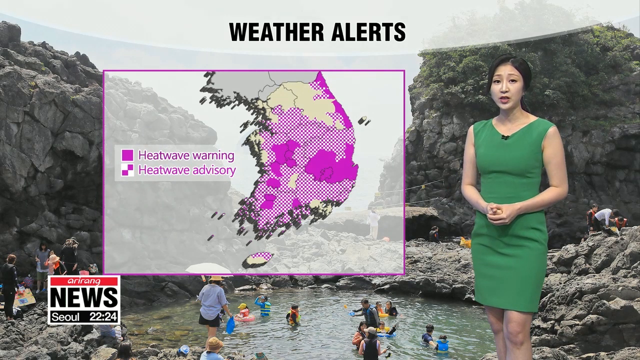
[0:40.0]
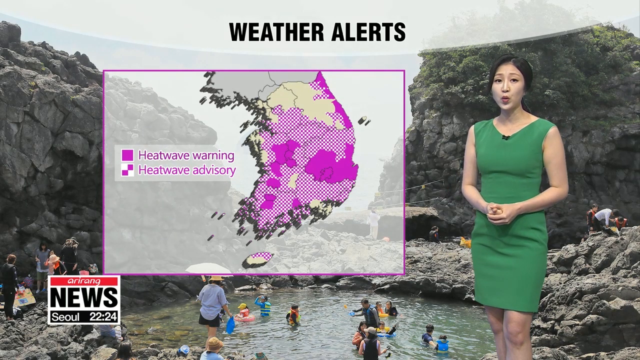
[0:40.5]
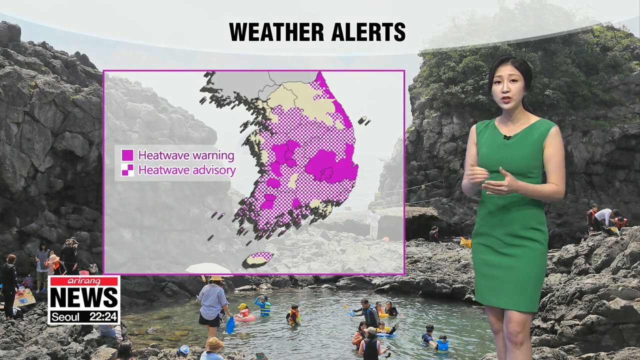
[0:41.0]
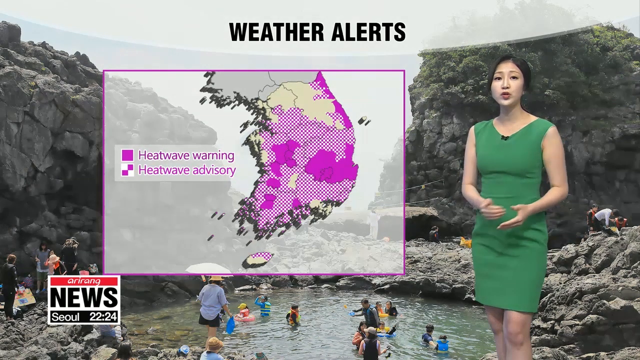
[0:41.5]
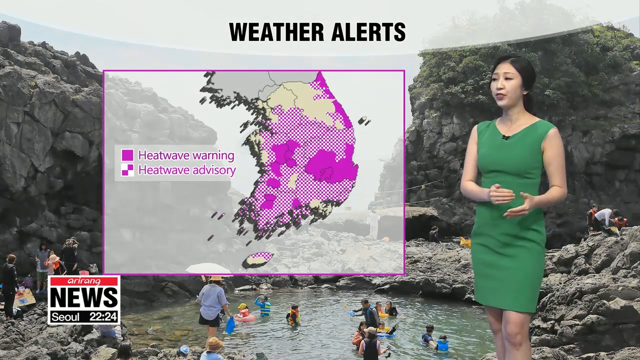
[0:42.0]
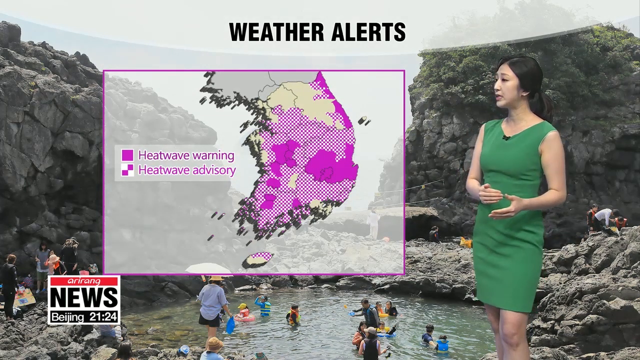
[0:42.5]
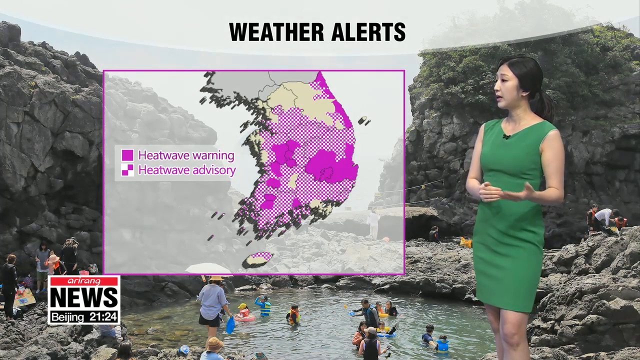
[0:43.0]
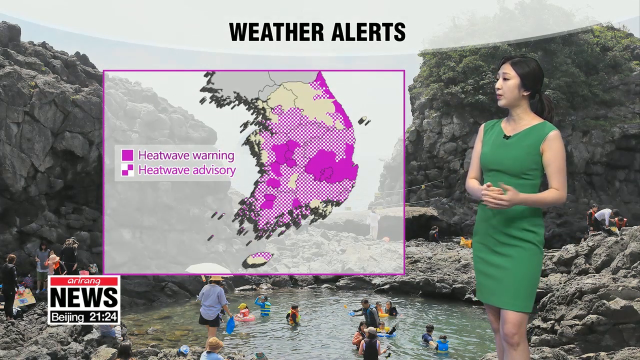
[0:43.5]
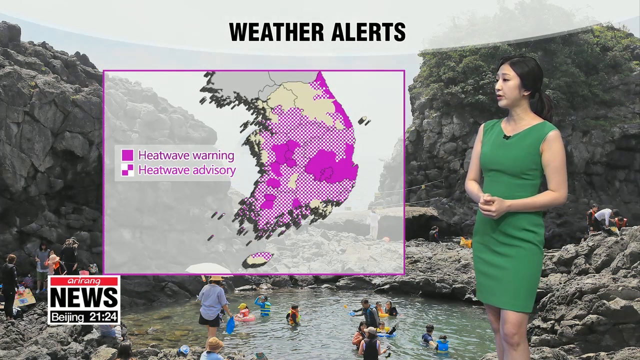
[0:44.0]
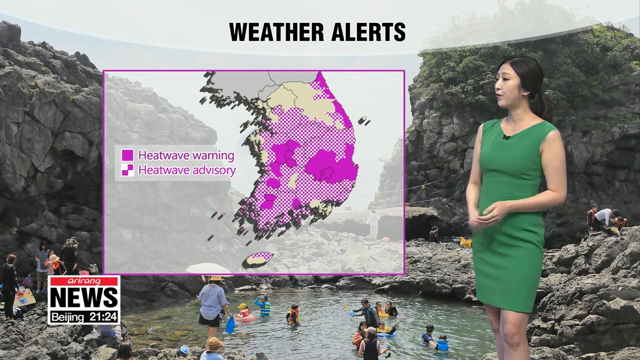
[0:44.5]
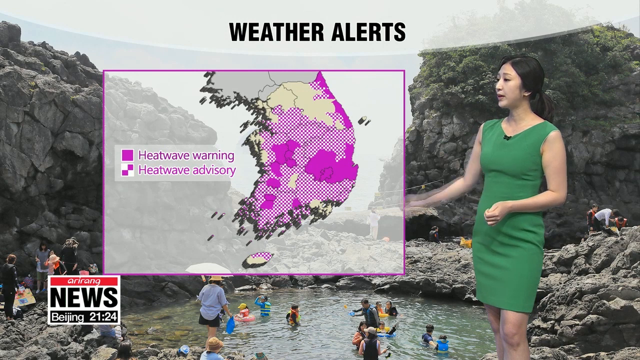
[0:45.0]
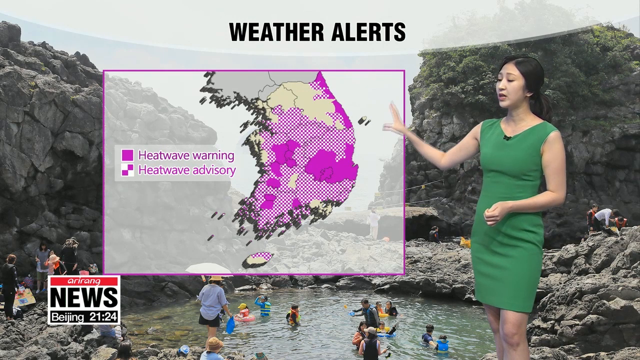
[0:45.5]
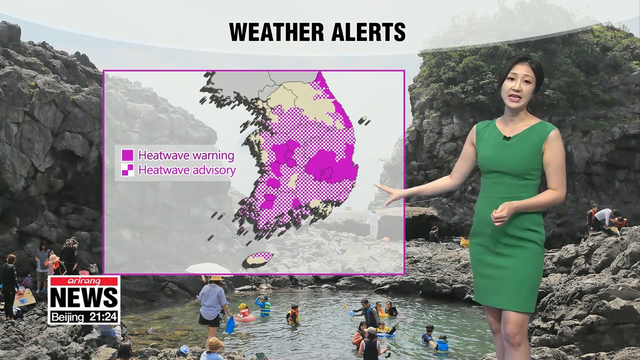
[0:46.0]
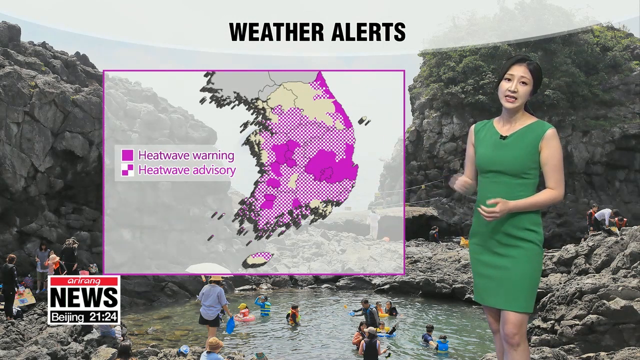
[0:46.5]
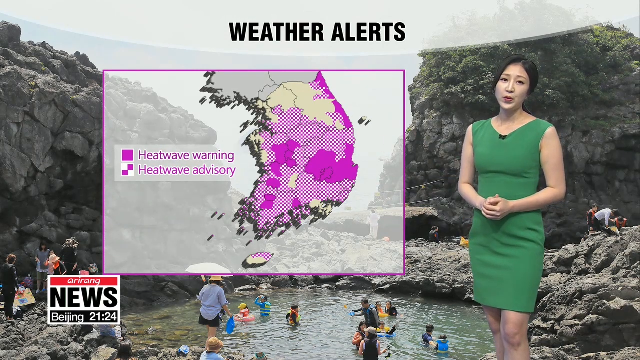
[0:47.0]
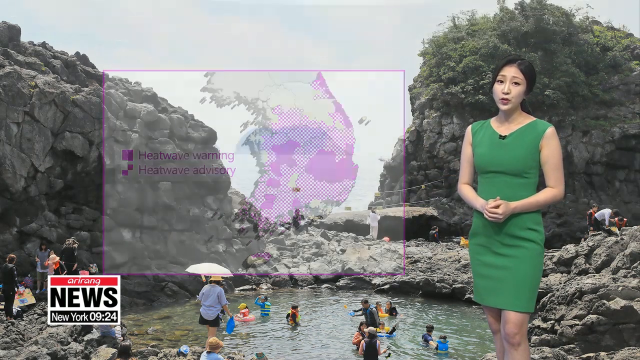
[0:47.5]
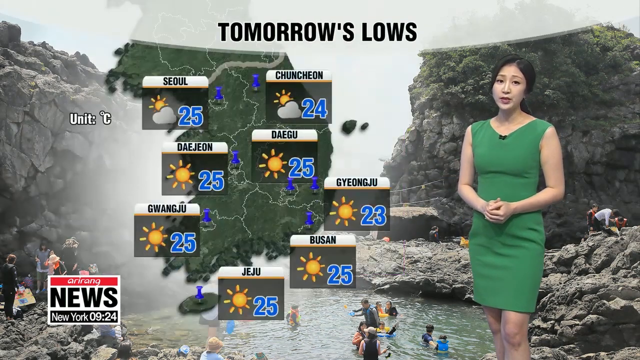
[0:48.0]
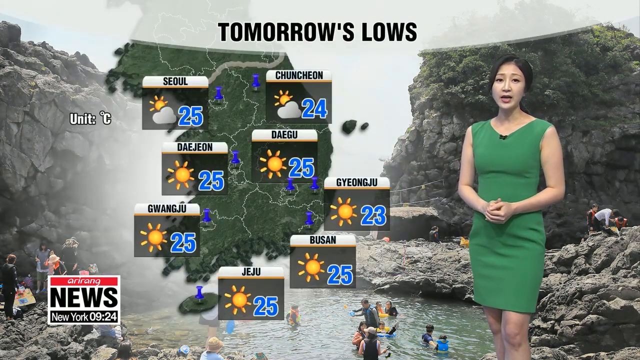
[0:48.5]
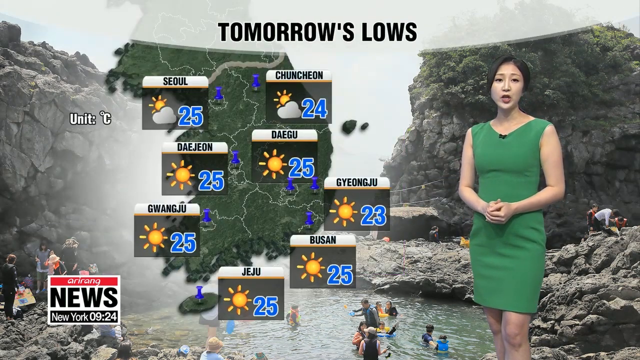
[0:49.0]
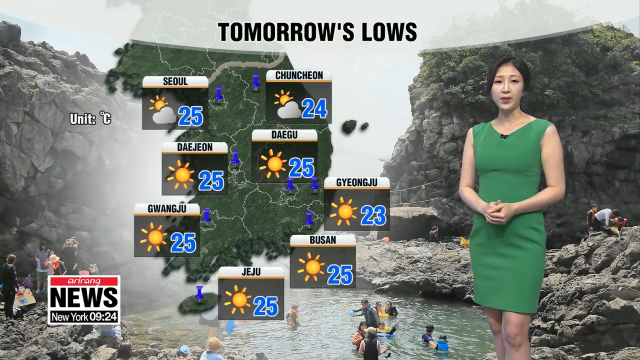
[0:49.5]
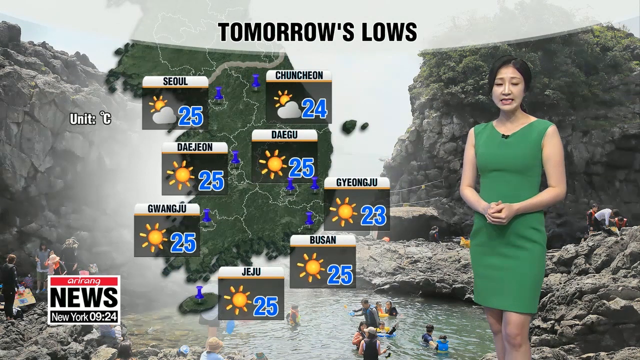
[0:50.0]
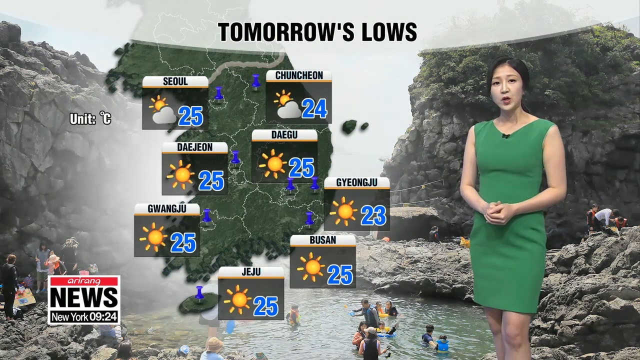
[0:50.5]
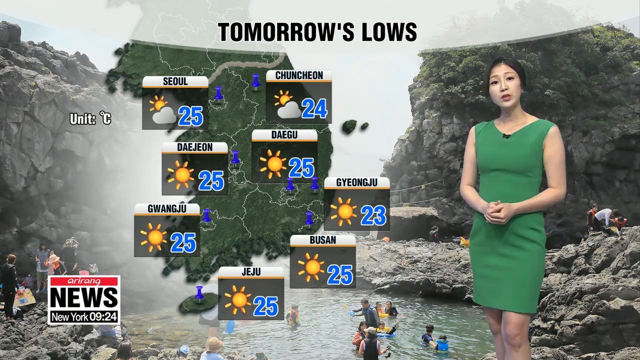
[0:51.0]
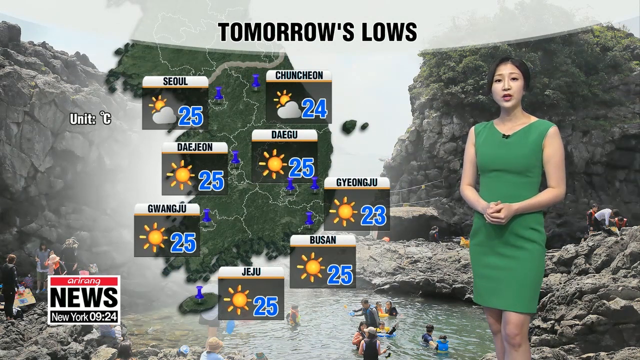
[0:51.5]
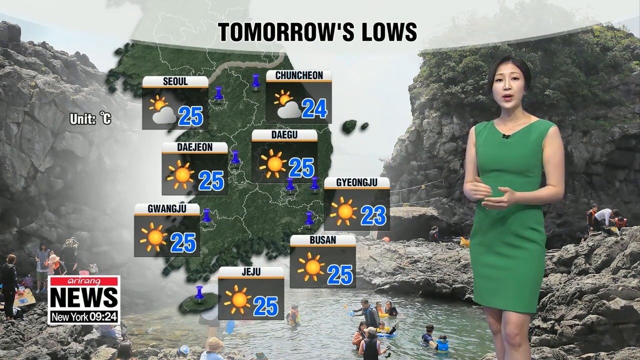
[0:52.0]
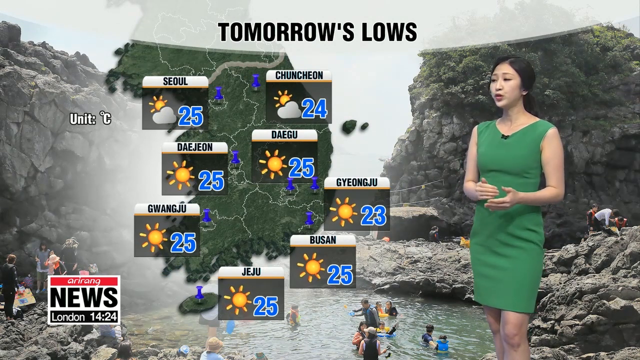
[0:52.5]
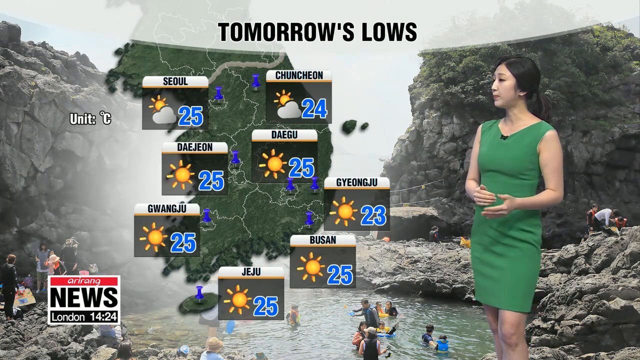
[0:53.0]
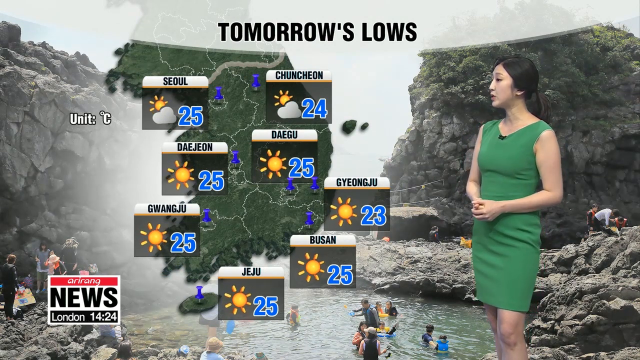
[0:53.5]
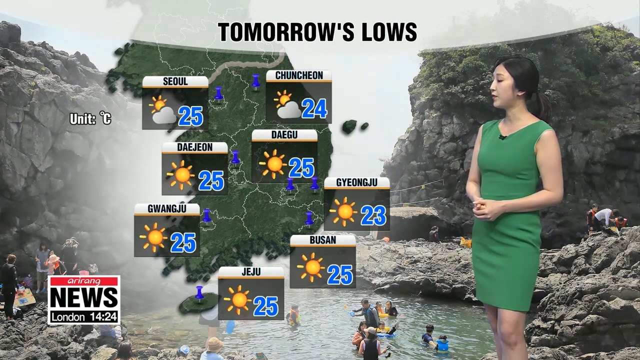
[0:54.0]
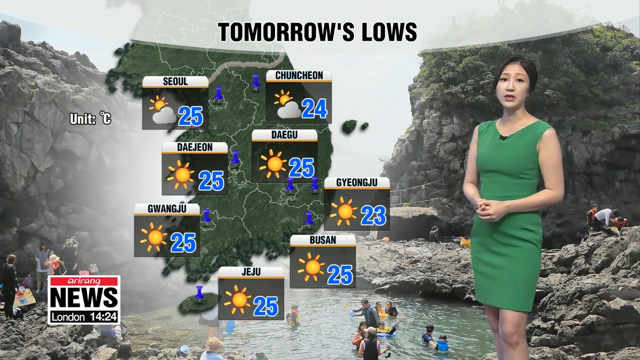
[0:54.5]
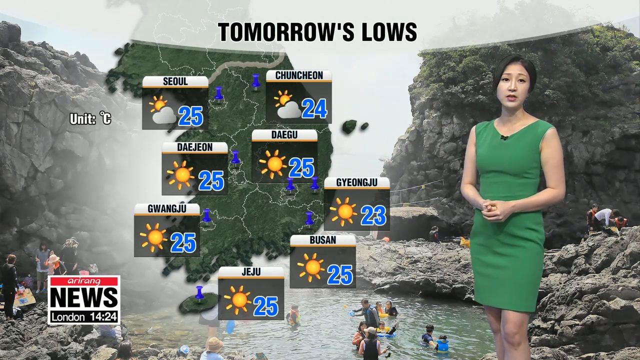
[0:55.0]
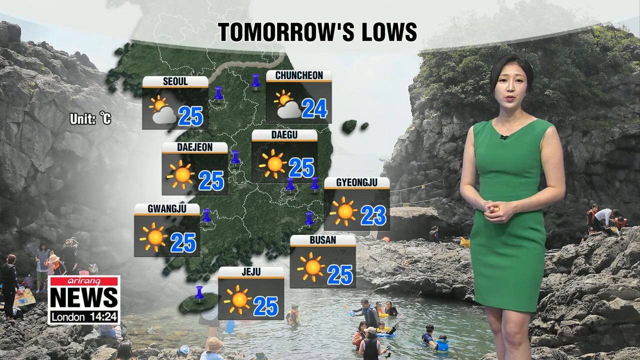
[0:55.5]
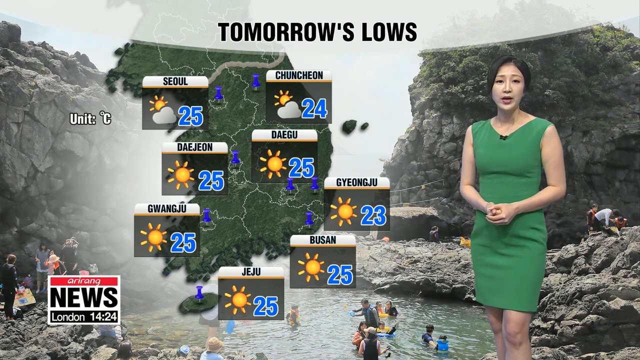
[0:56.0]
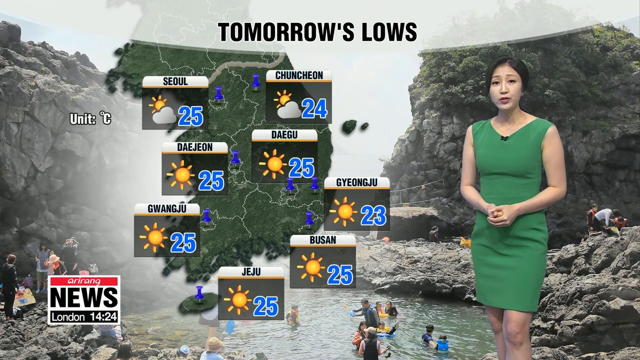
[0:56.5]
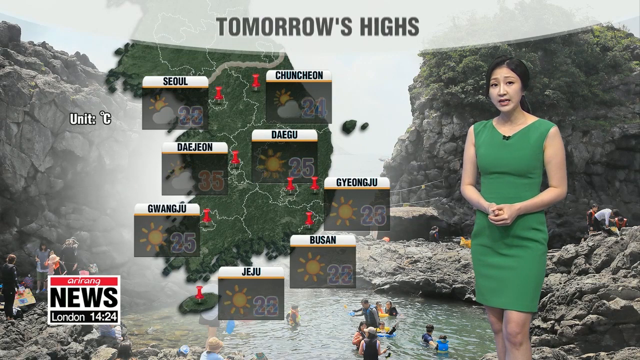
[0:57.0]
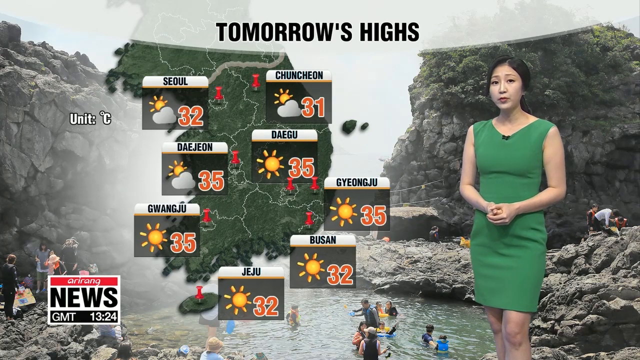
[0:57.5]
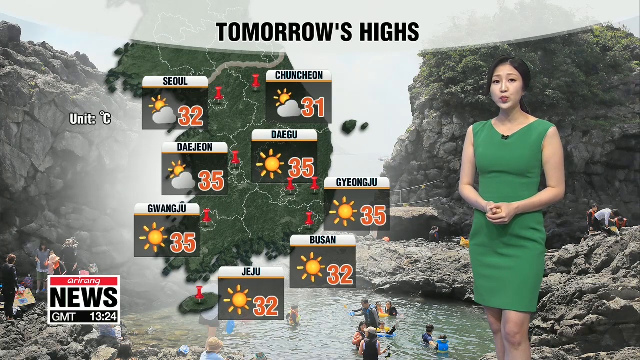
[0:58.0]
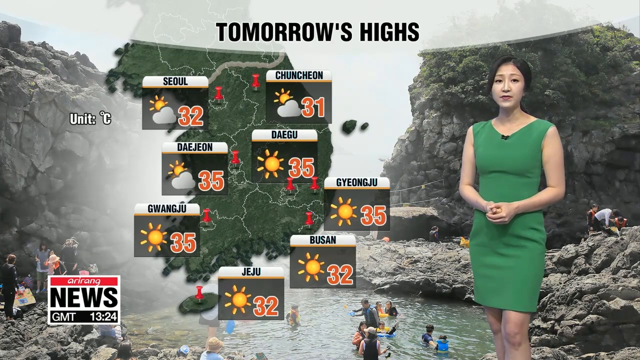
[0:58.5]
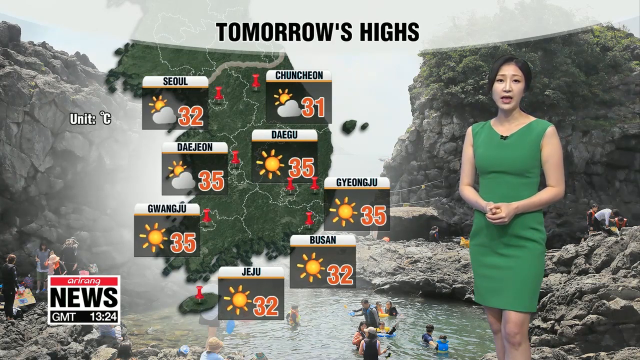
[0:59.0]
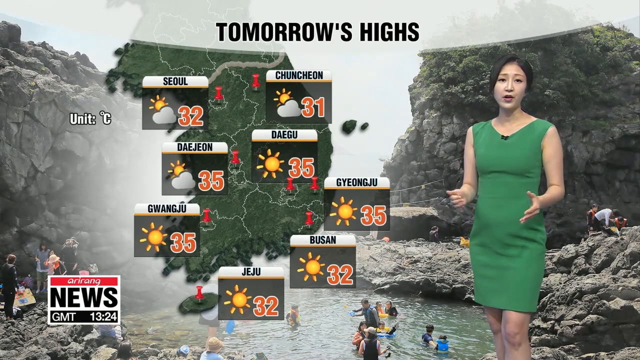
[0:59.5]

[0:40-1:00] A weather report chart reads "heatwave warning" and "heatwave advisory" while the woman stands next to it, on the other side, using her hands to show what she means and where. Another weather chart follows, titled "tomorrow's lows", listing different cities with their low temperatures, and then one titled "tomorrow's highs", showing cities with high temperatures. The lady keeps talking, seemingly giving a full, detailed weather report.